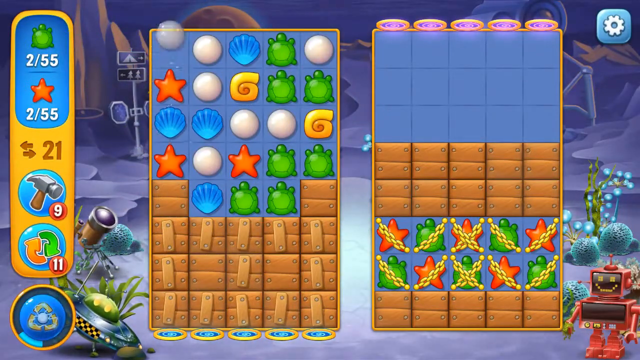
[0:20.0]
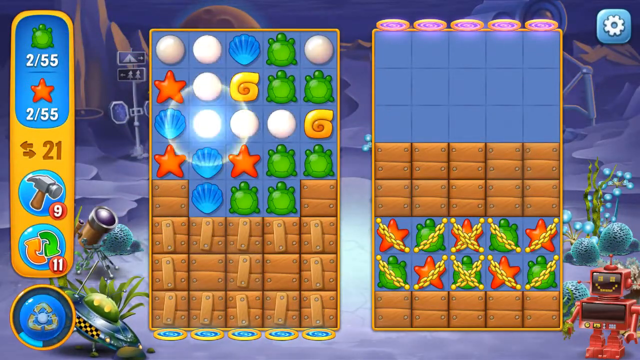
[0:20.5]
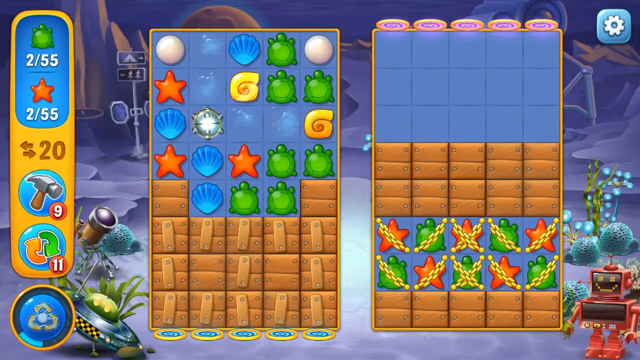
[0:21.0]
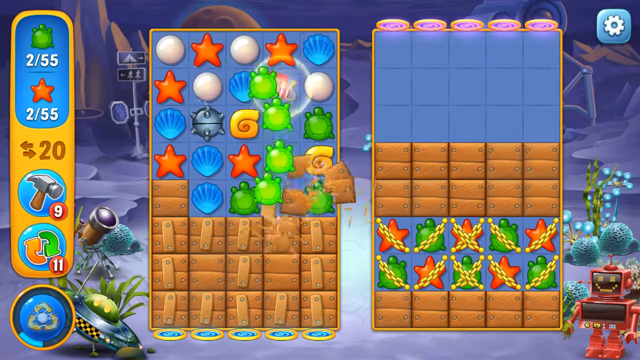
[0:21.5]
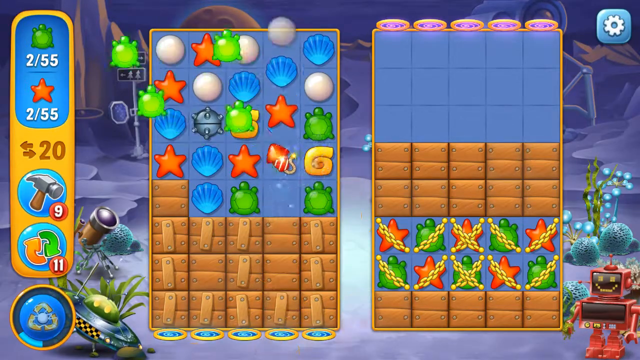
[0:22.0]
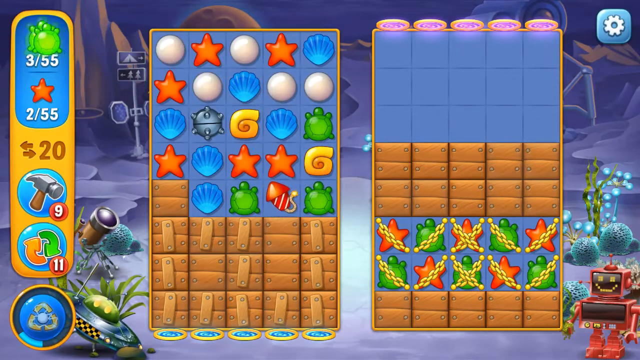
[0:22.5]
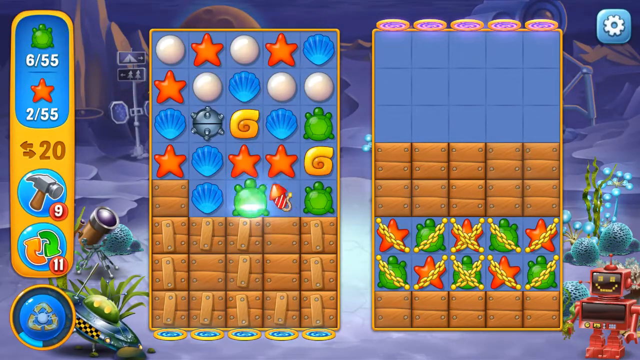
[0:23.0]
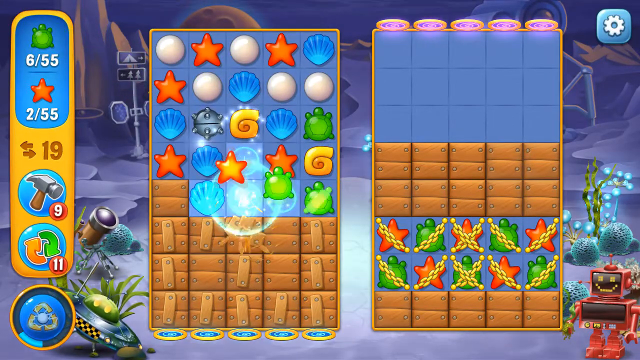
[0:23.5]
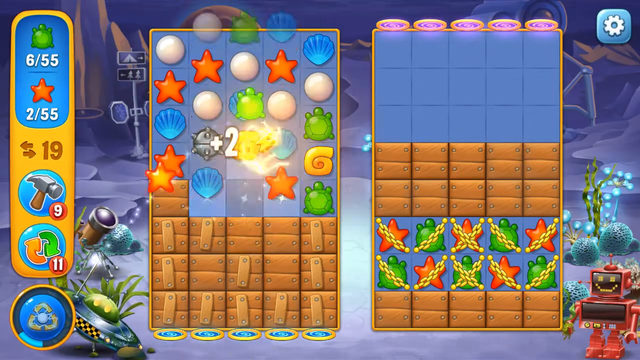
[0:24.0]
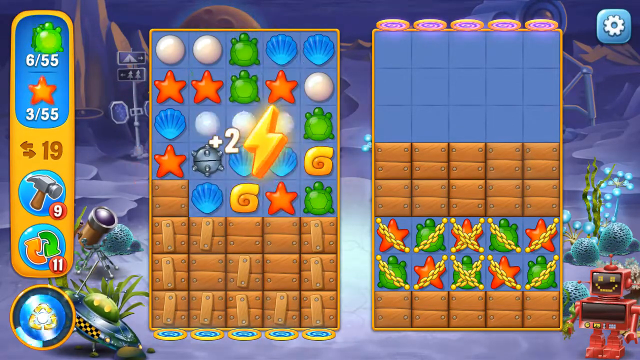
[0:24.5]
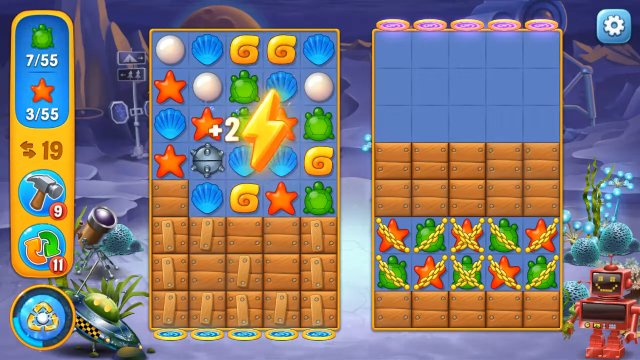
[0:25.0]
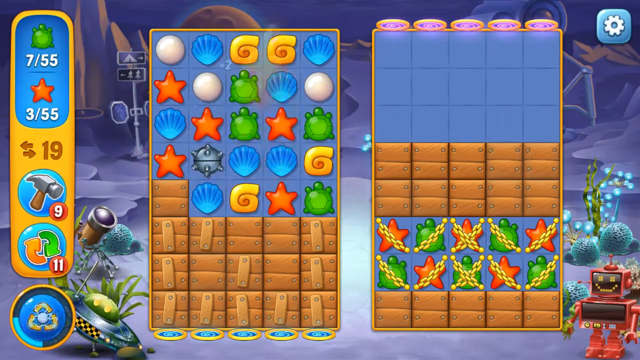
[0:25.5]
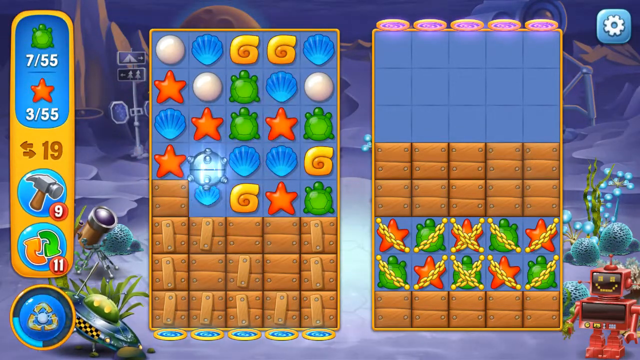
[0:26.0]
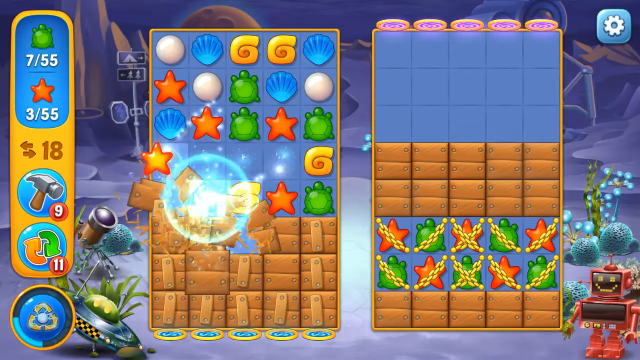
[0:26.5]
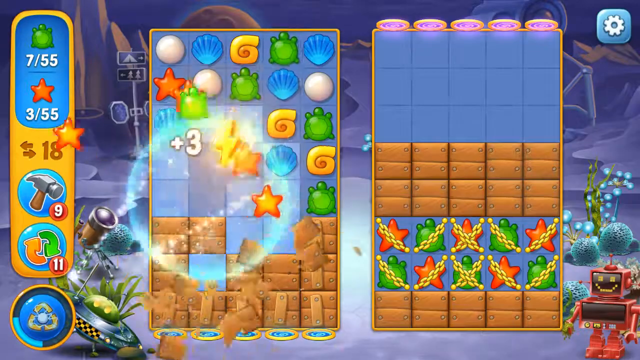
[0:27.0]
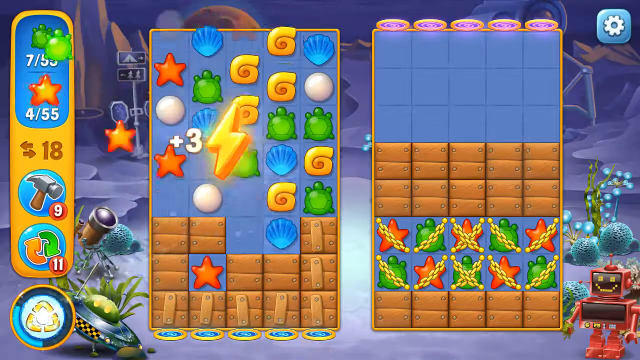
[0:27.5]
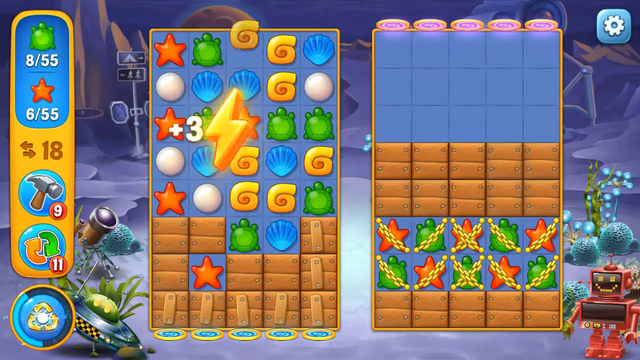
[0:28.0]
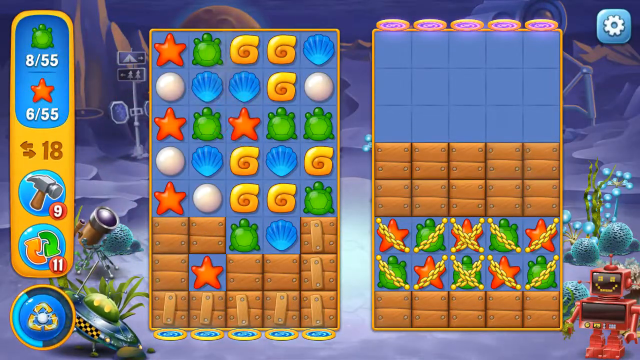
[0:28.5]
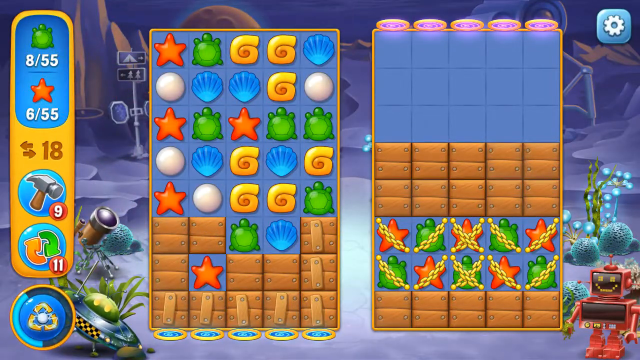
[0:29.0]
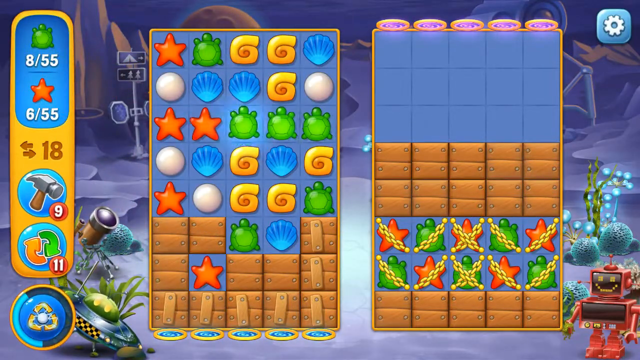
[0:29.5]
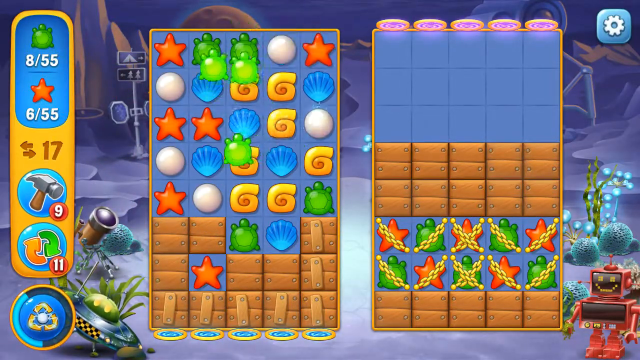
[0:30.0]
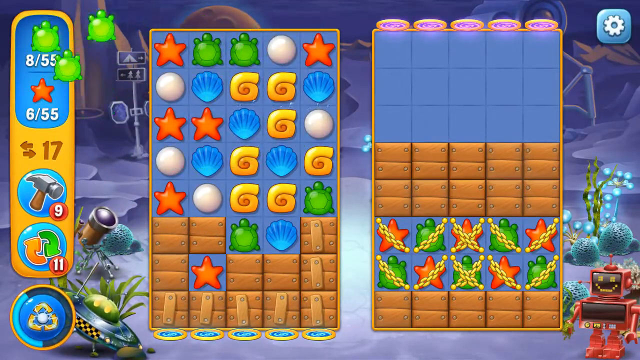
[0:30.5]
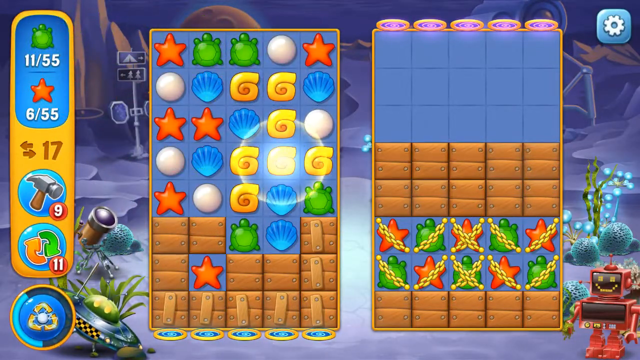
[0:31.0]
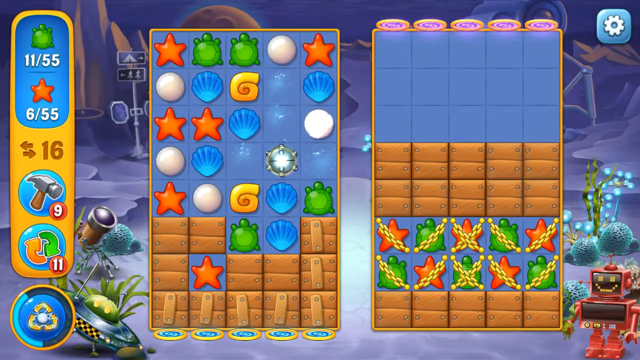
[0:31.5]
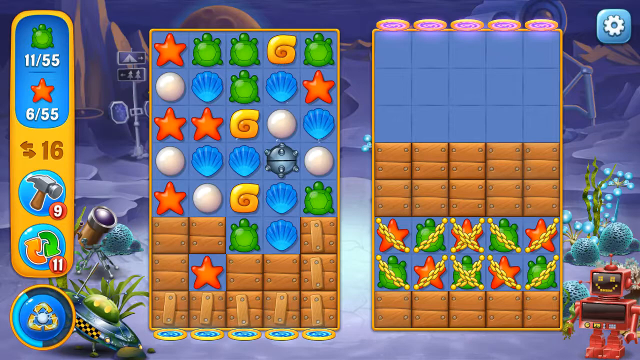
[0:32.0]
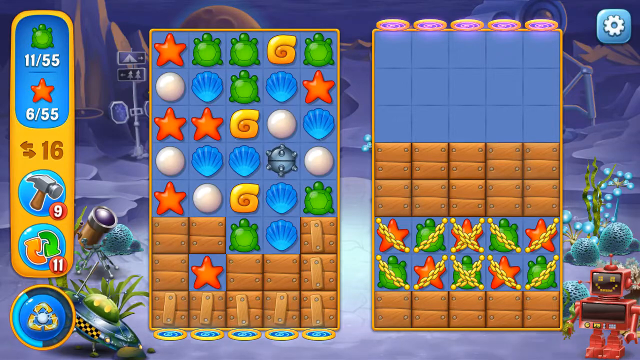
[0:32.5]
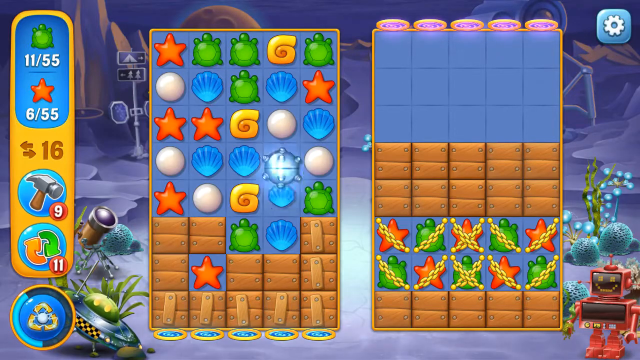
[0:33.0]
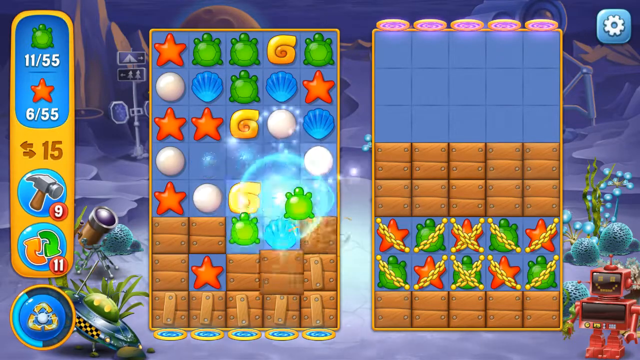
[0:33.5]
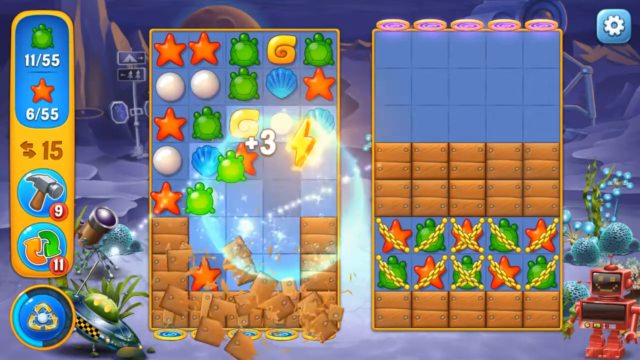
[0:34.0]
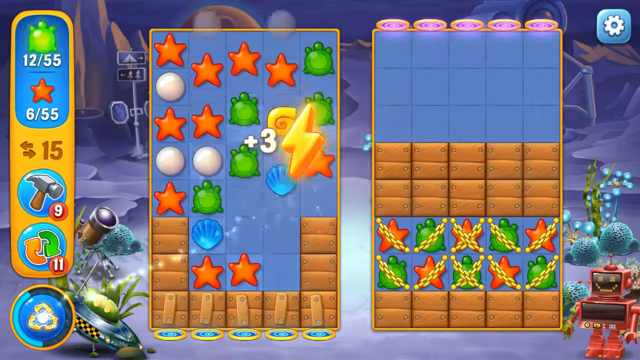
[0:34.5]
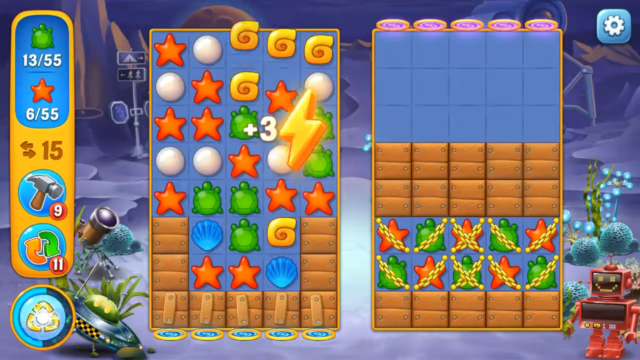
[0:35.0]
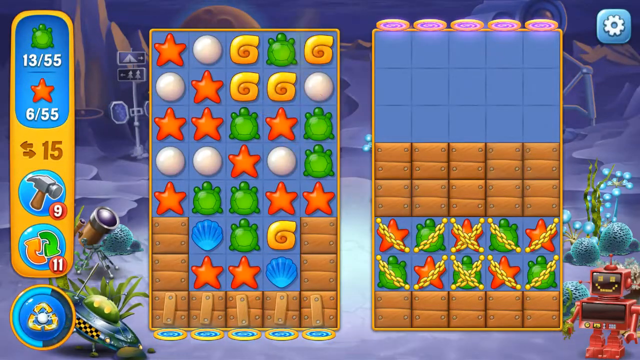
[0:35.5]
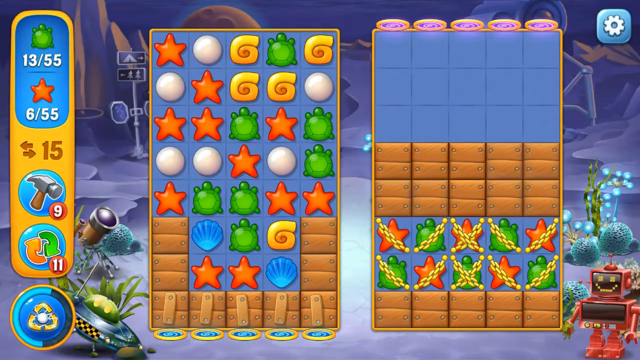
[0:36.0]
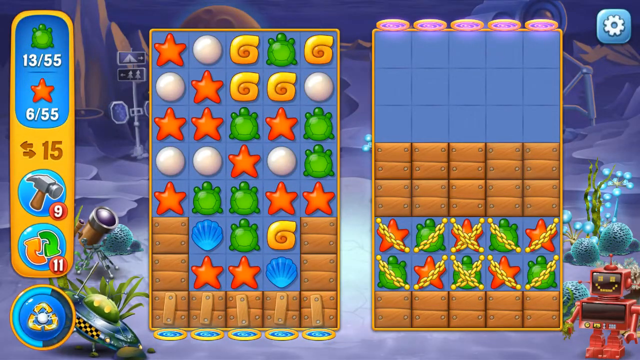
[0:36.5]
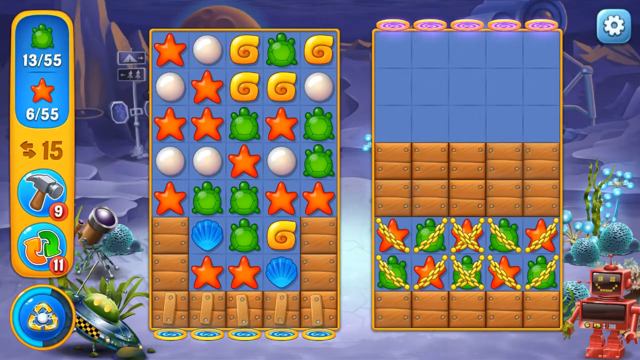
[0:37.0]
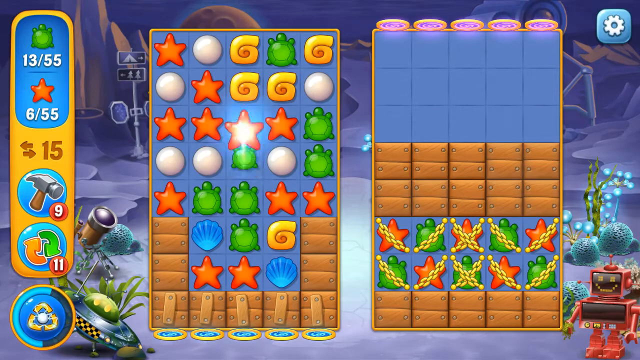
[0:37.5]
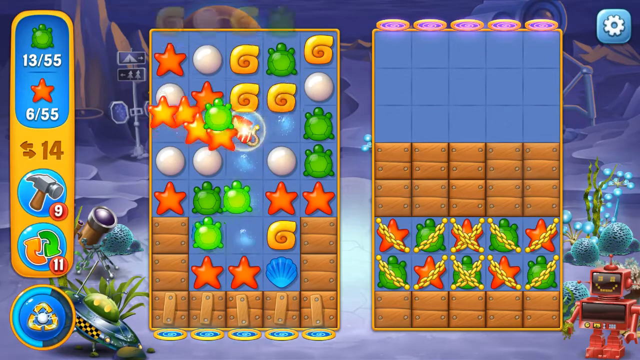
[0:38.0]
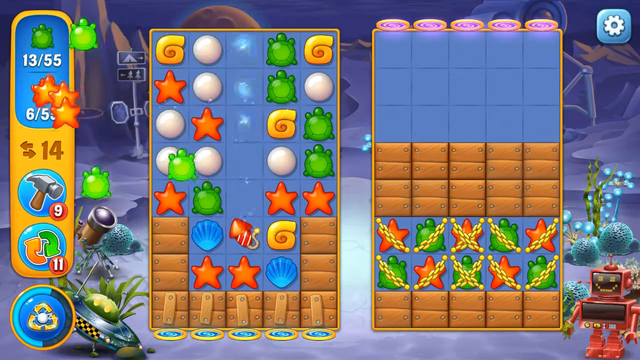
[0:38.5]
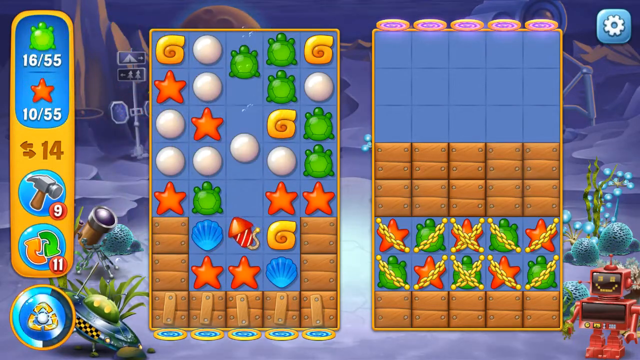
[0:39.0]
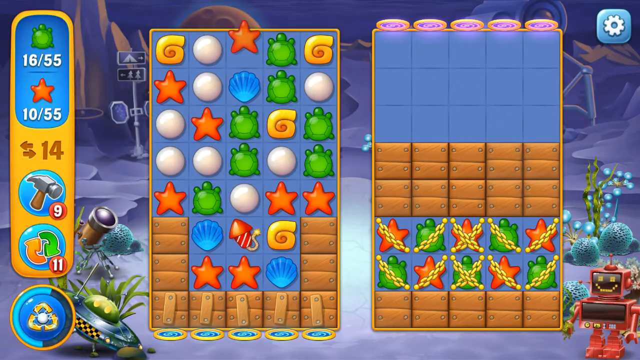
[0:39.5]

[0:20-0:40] A game screen shows a board of pearls, shells, starfish and turtles, with some of the stars and turtles wearing chains. A little robot is in the bottom right corner and a little setting bar is at the top. On the left, the settings read 2 out of 55 turtles and 2 out of 55 stars, with 21 beneath that, plus 9 hammers and 11 shuffles. The person clicks on different objects on the board, making matches, and the counts of turtles and stars acquired go up: the turtles reach 8 out of 55 and the stars 6 out of 55, with 17 moves left. They keep making moves, a little lightning bolt appears on the screen saying "+3", and the counts reach 13 out of 55 turtles and 6 out of 55 stars.